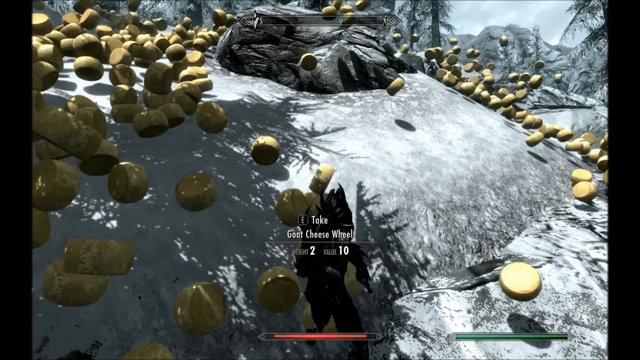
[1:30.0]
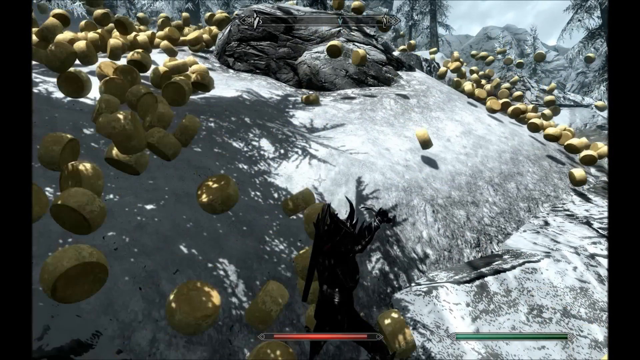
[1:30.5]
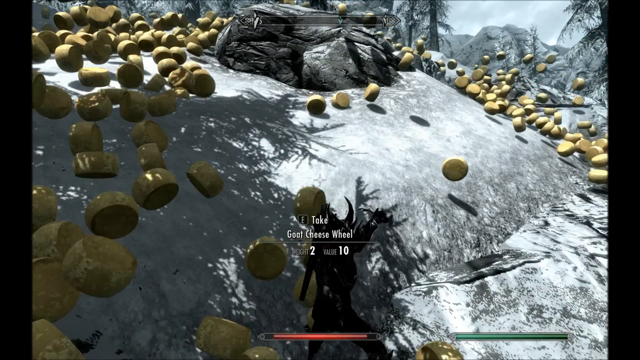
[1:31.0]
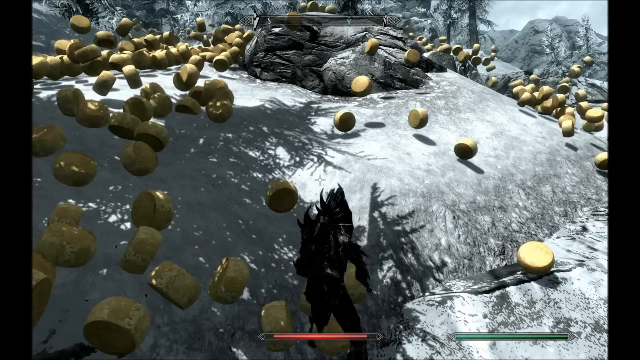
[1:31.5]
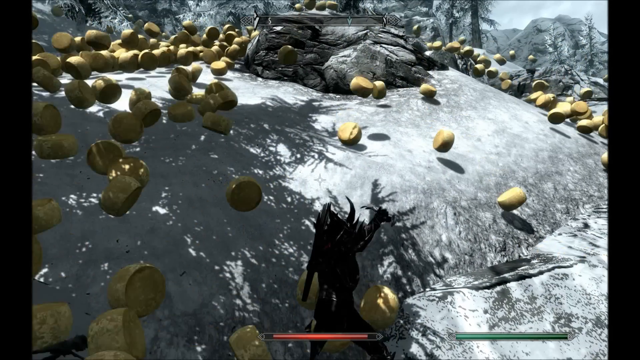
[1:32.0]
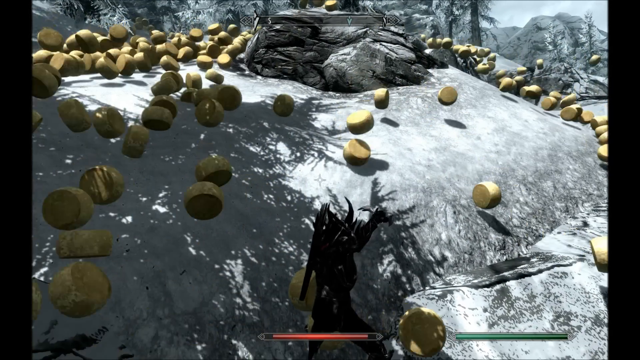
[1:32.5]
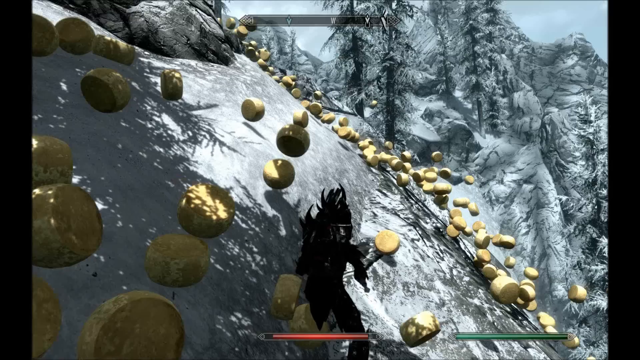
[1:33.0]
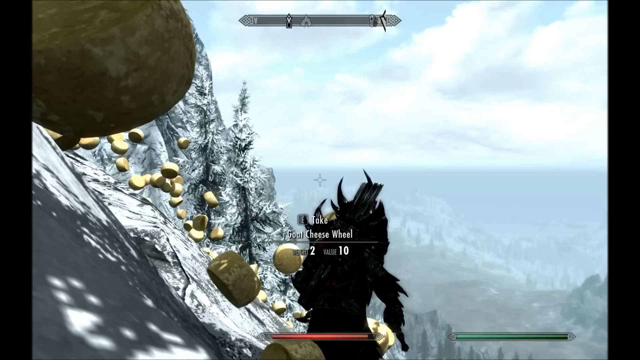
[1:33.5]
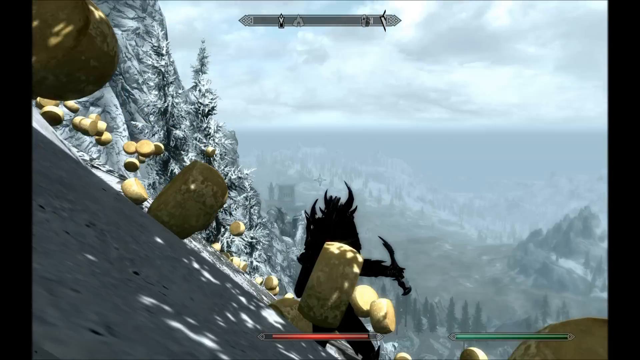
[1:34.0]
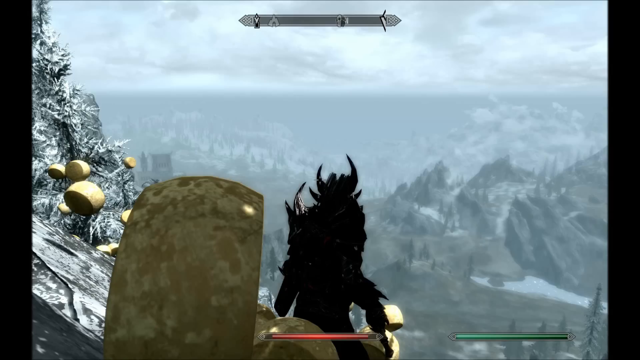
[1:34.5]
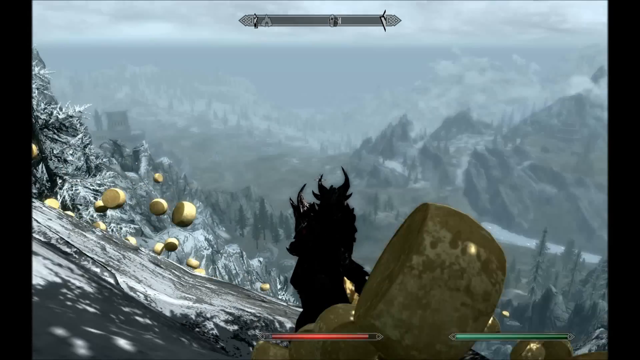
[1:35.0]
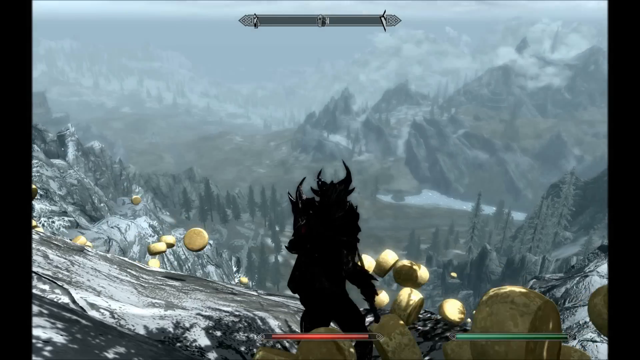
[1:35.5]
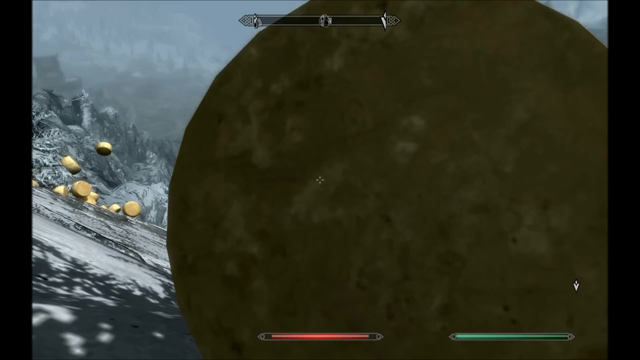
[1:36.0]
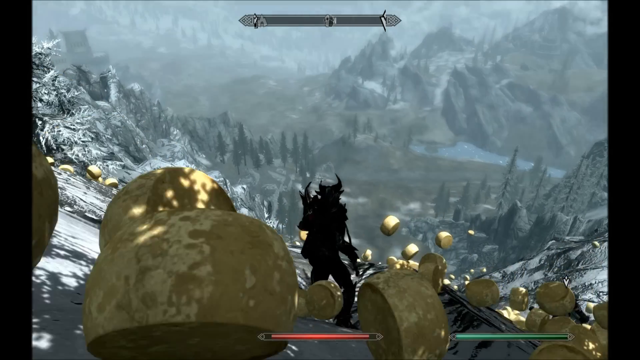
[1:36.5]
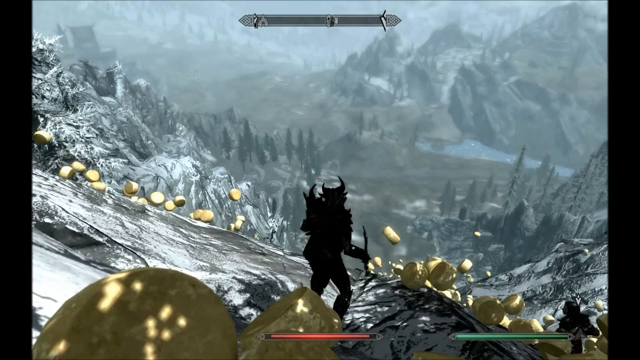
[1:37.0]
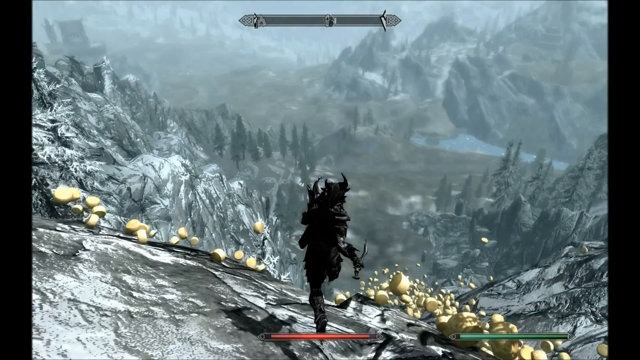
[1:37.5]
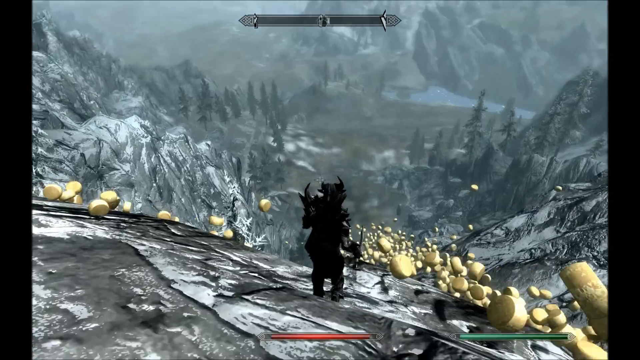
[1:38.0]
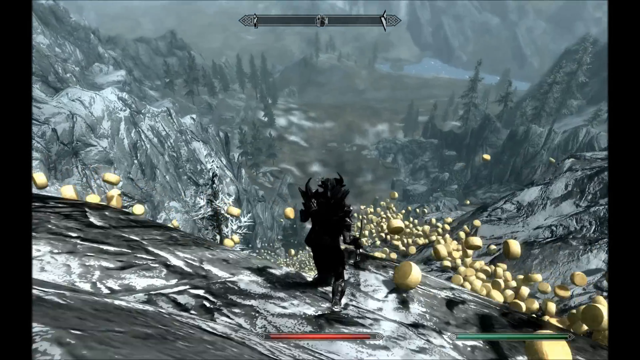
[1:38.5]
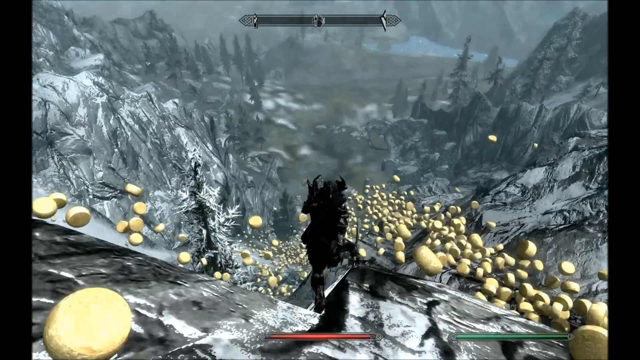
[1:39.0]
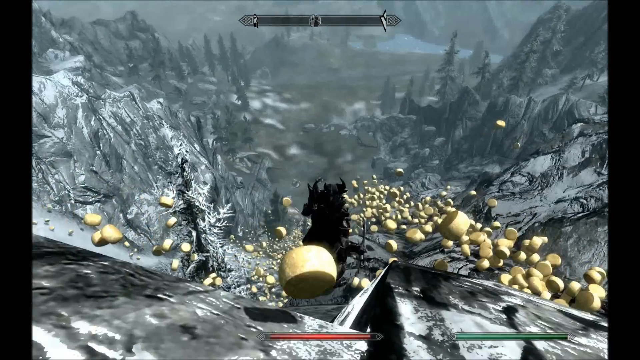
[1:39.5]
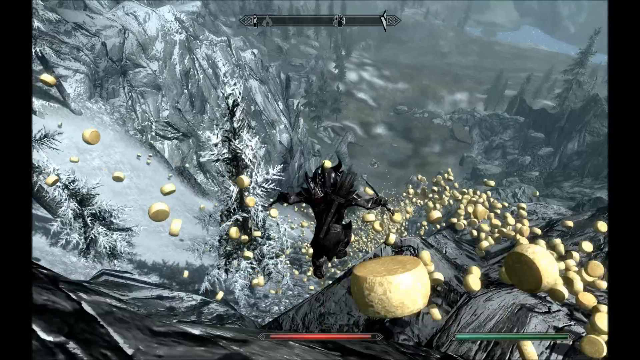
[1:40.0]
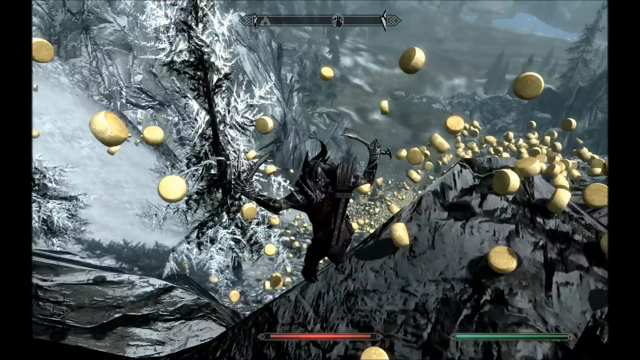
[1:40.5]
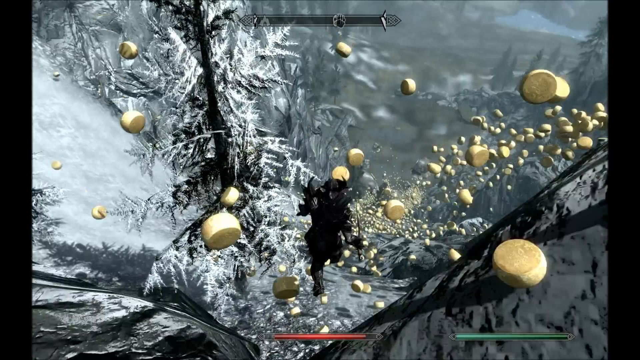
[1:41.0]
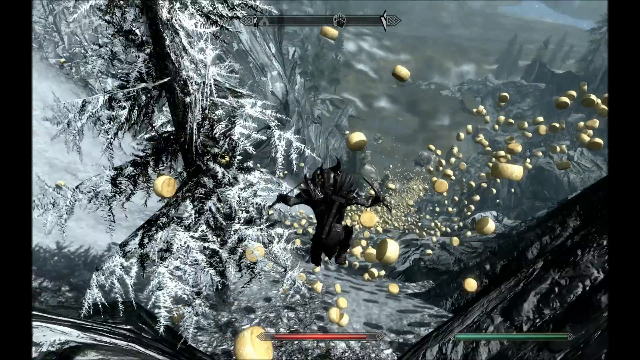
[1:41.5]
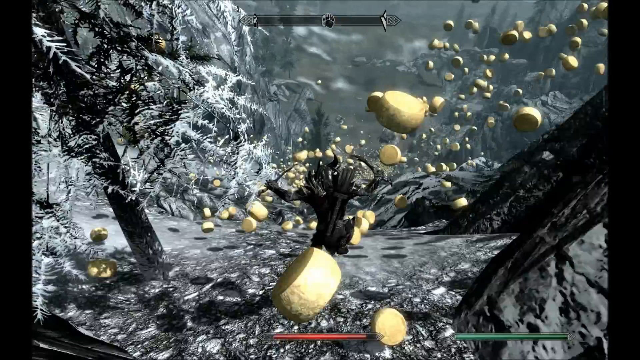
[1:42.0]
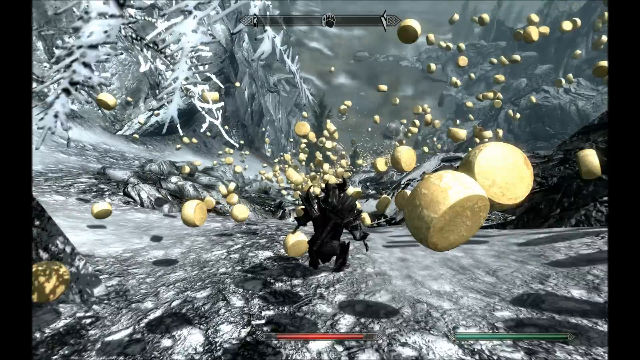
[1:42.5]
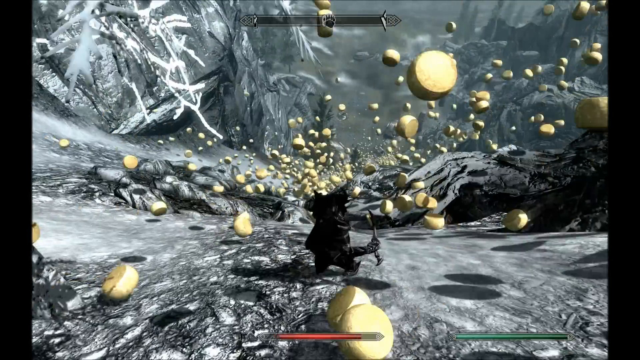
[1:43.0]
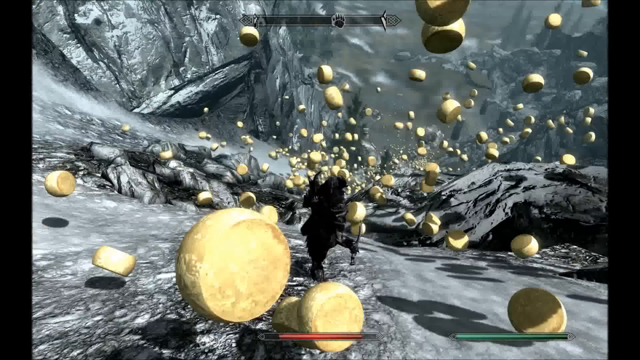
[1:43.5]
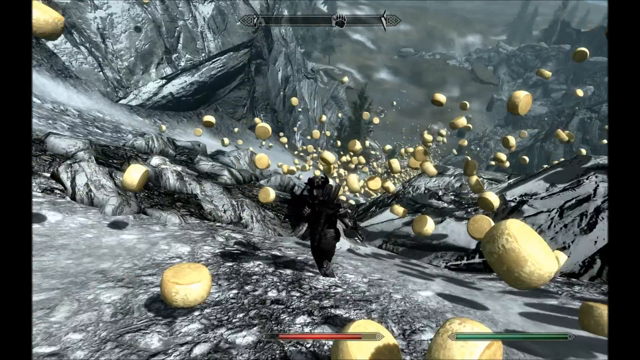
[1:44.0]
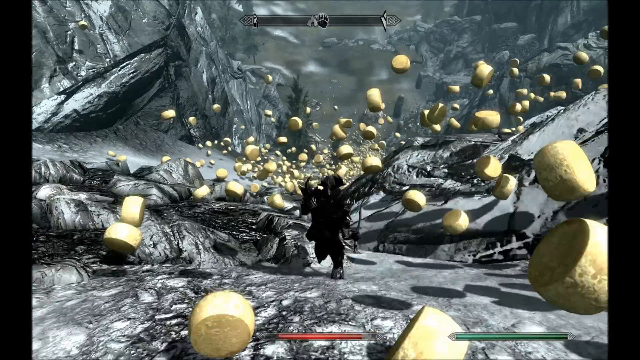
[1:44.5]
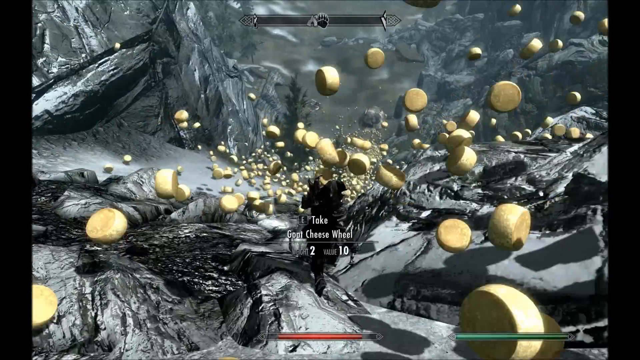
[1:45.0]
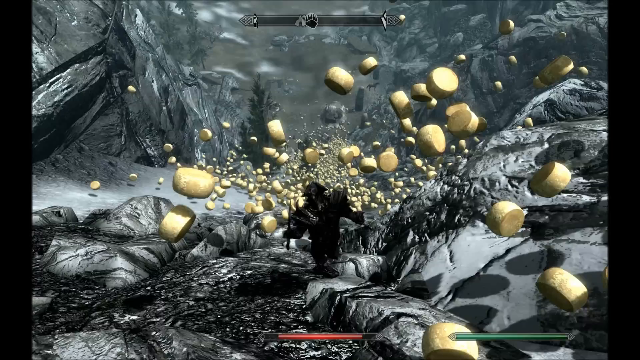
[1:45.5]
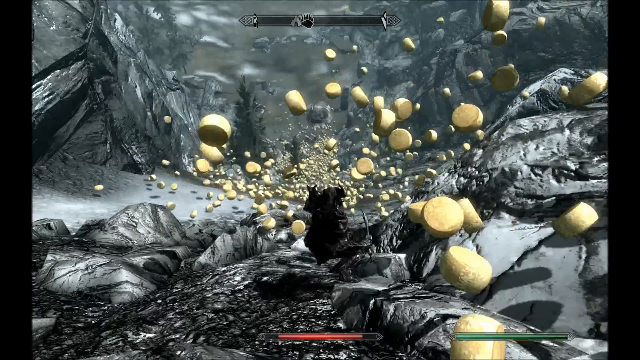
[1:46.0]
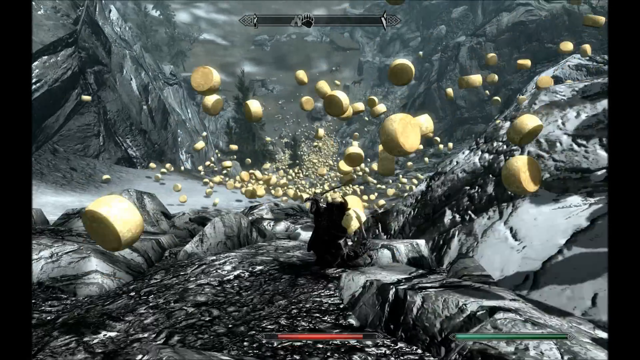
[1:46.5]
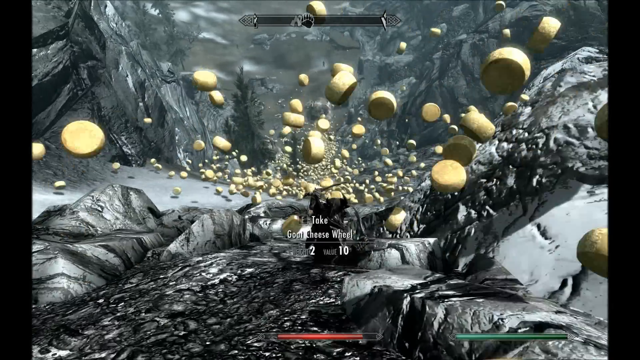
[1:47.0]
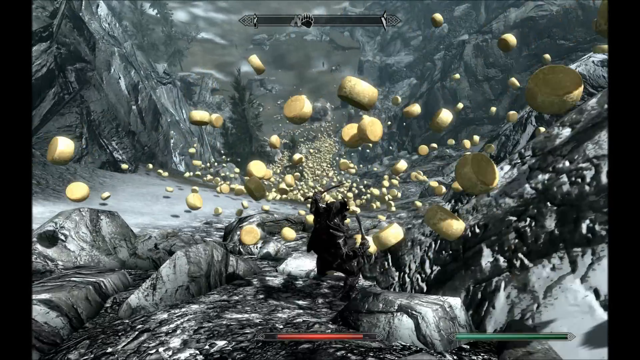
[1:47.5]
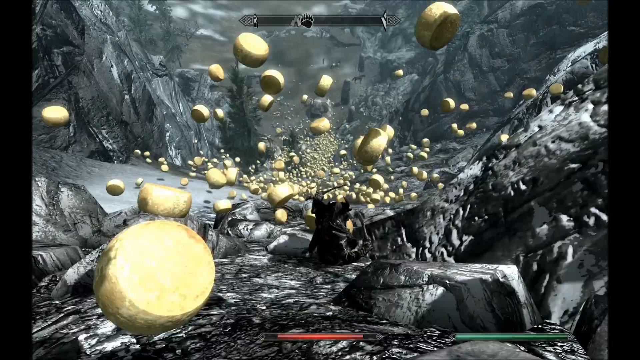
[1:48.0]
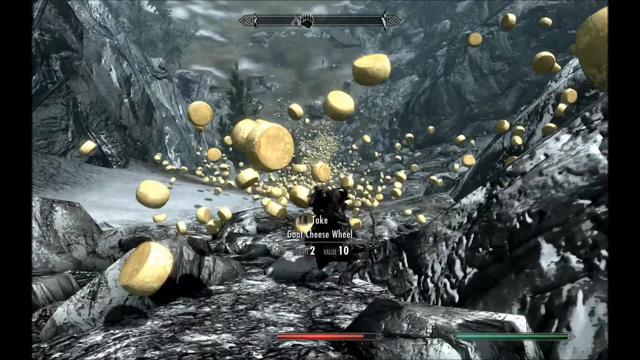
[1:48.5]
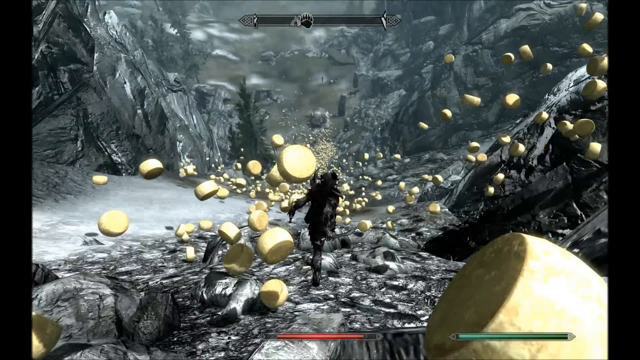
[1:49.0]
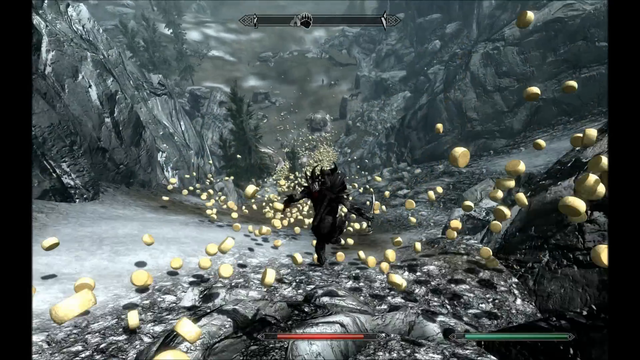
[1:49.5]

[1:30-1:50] In the first-person video game, shown in a third-person view, the character's avatar is at the bottom center of the screen, apparently on a snowy mountain. Objects go down the hill. The character kind of turns around, looking toward the top of the mountain, and then faces toward the bottom of the mountain. Off in the distance it kind of gets less snowy. Cheese wheels fall past the character, who is trying to collect them. Shadows of trees above the character are visible, and wording that apparently pops up at the bottom center reads "Take a cheese wheel".